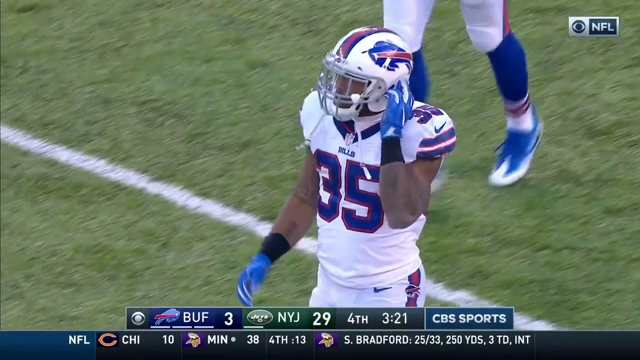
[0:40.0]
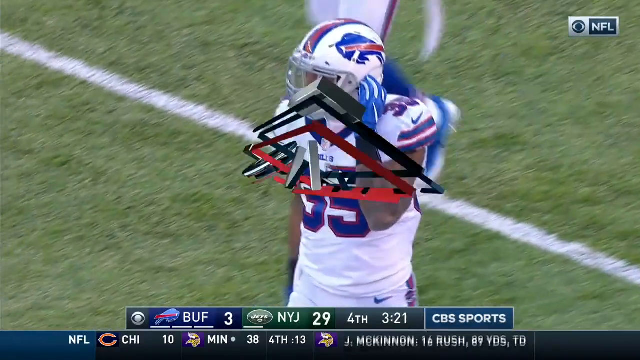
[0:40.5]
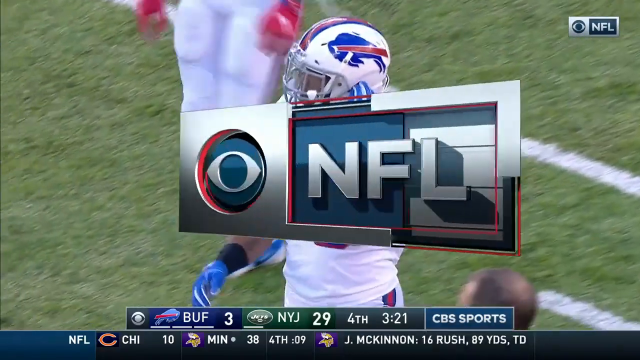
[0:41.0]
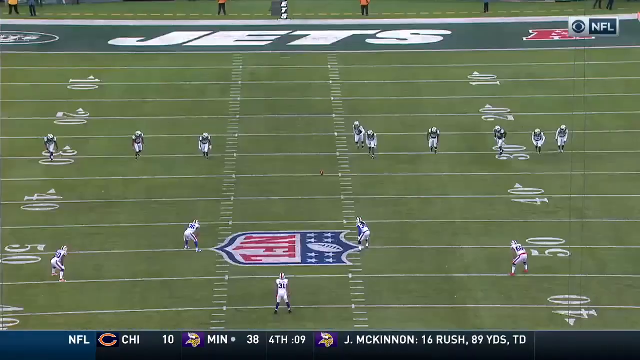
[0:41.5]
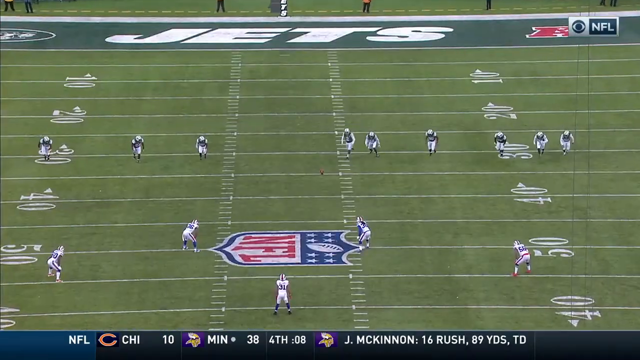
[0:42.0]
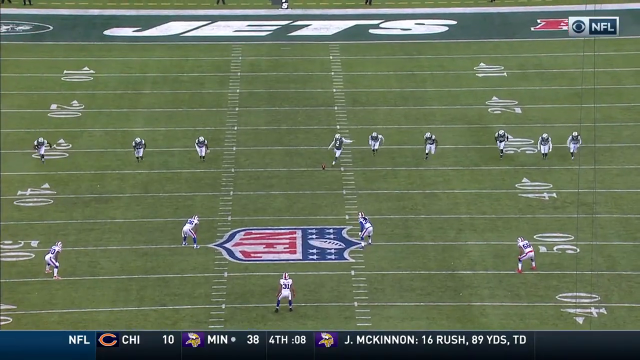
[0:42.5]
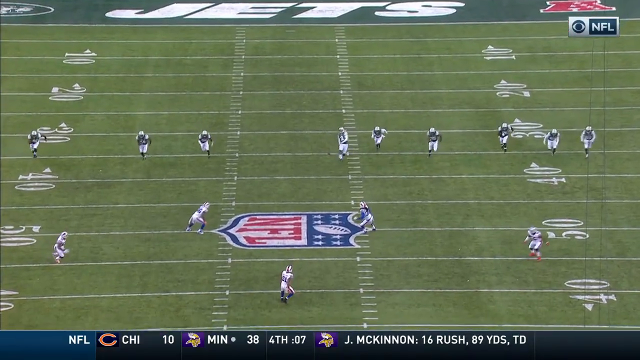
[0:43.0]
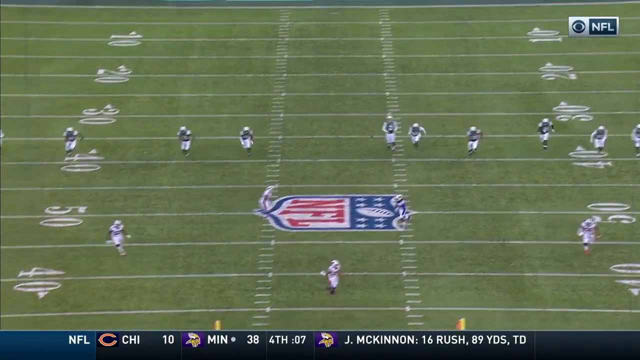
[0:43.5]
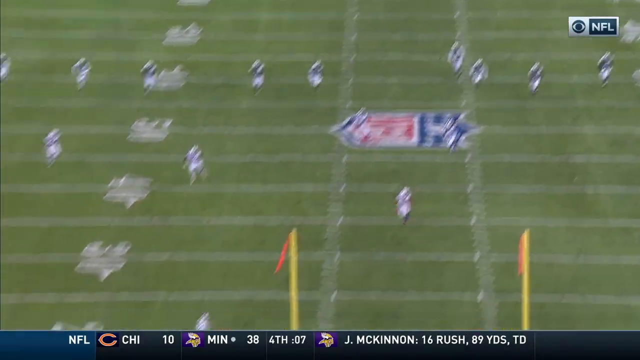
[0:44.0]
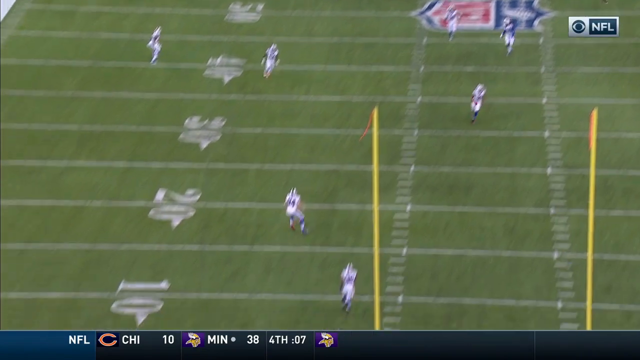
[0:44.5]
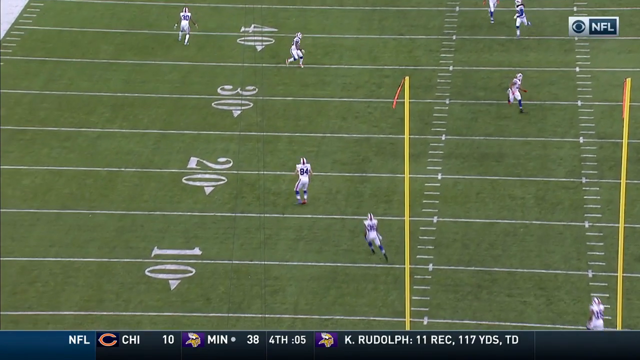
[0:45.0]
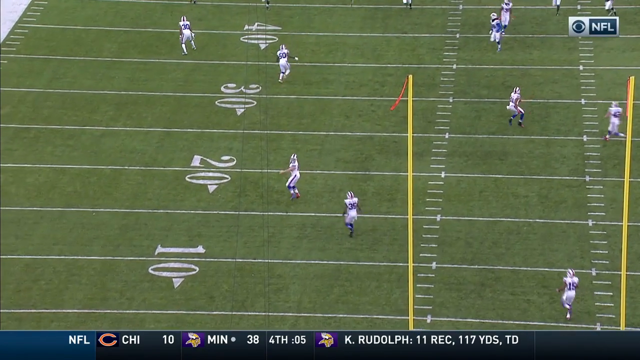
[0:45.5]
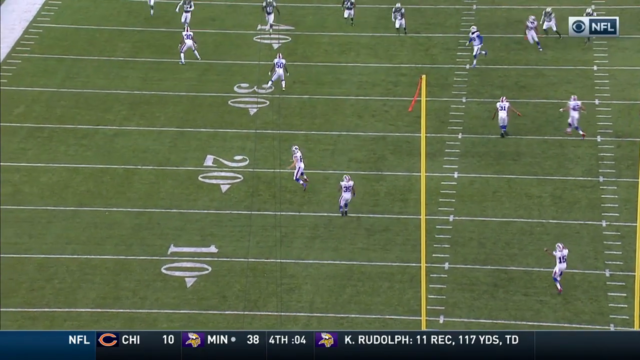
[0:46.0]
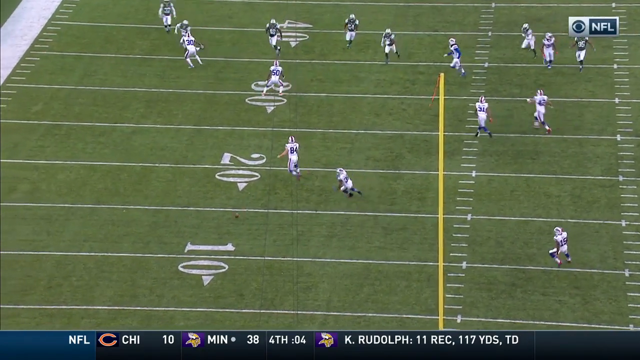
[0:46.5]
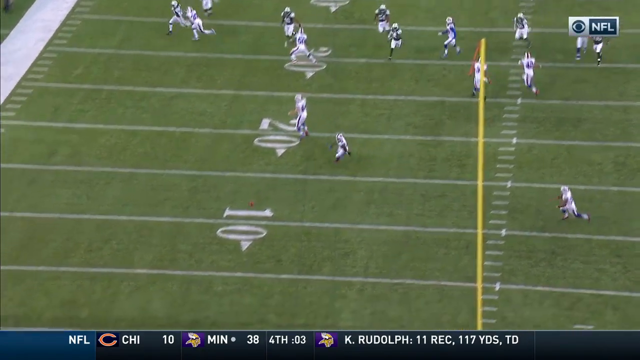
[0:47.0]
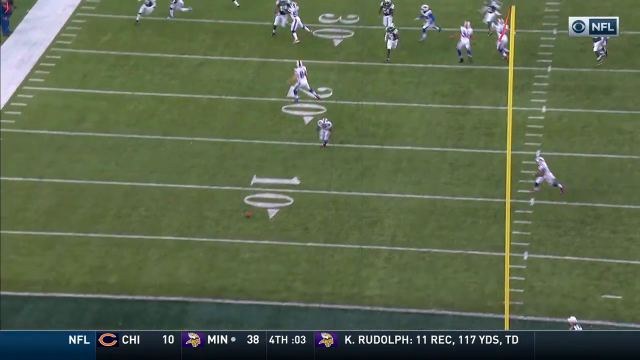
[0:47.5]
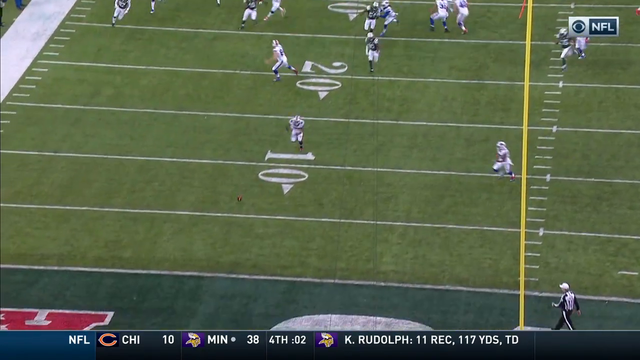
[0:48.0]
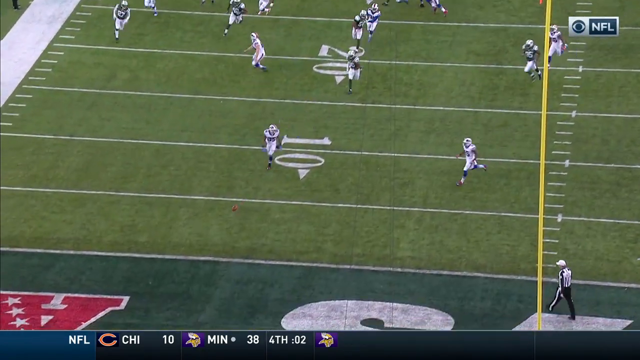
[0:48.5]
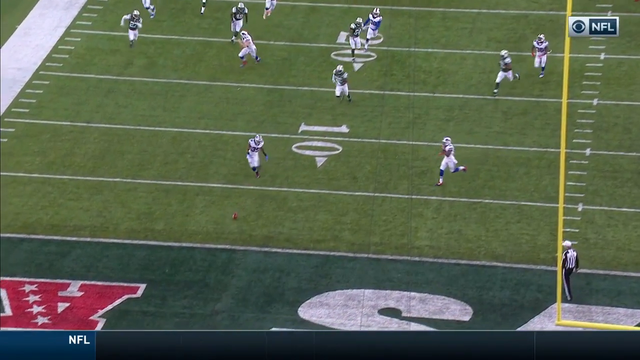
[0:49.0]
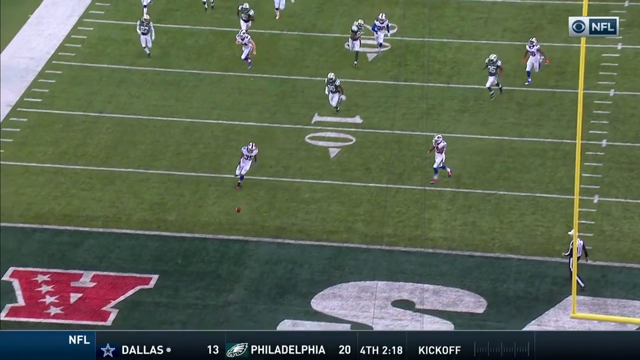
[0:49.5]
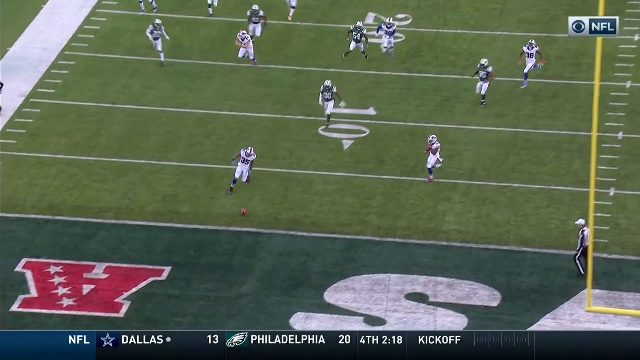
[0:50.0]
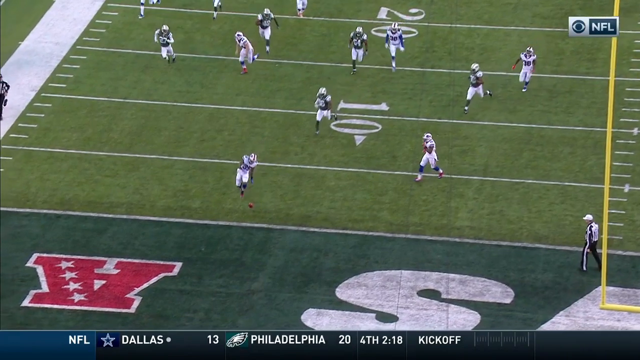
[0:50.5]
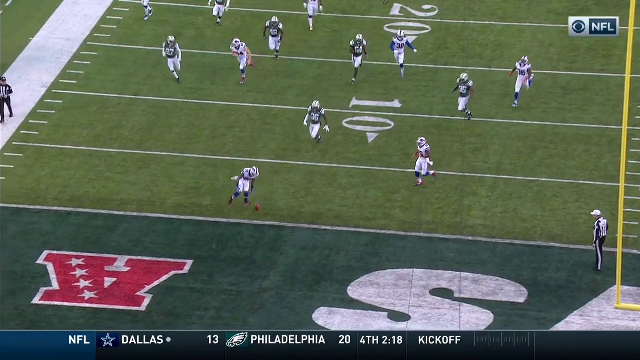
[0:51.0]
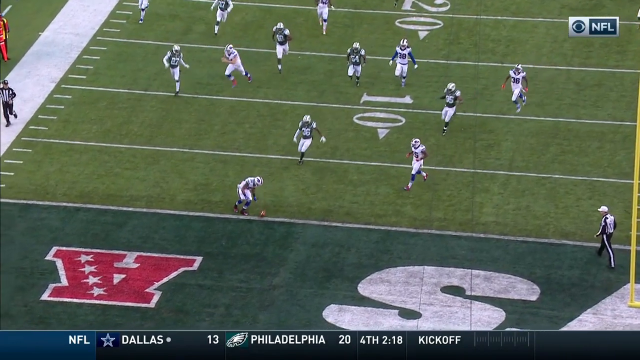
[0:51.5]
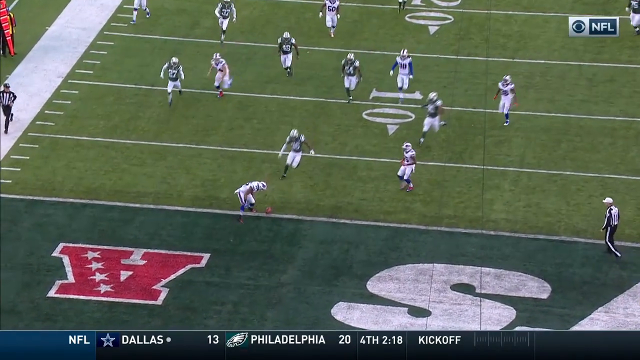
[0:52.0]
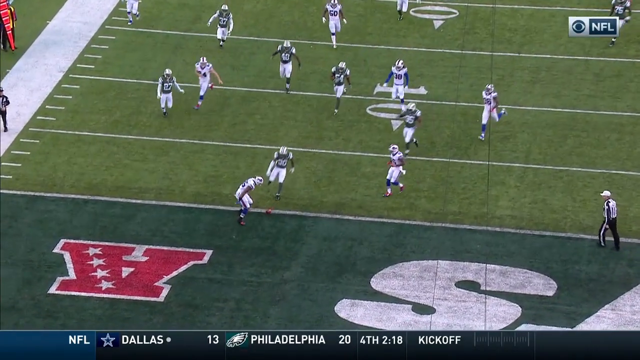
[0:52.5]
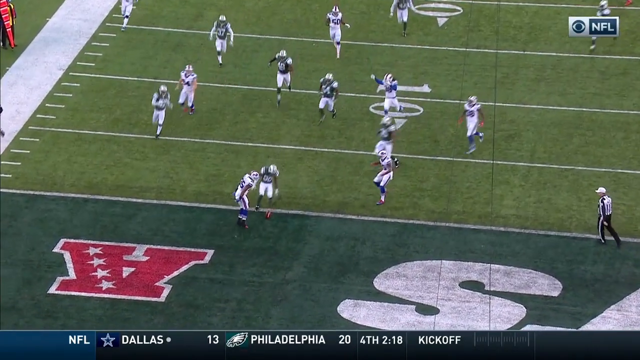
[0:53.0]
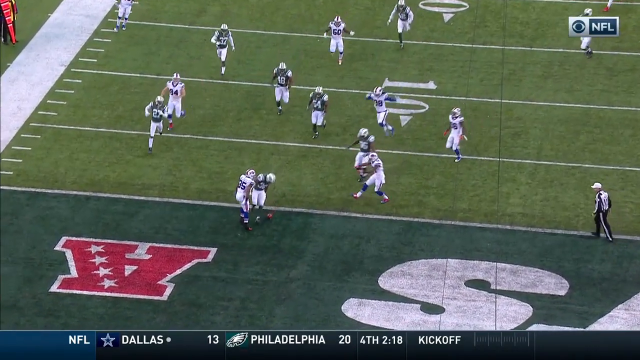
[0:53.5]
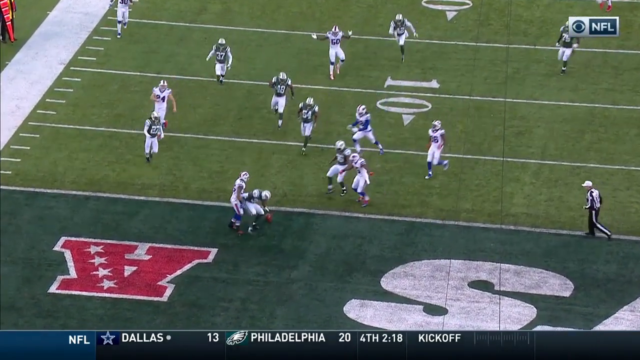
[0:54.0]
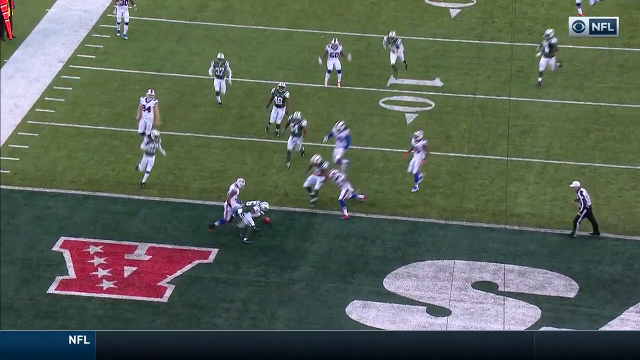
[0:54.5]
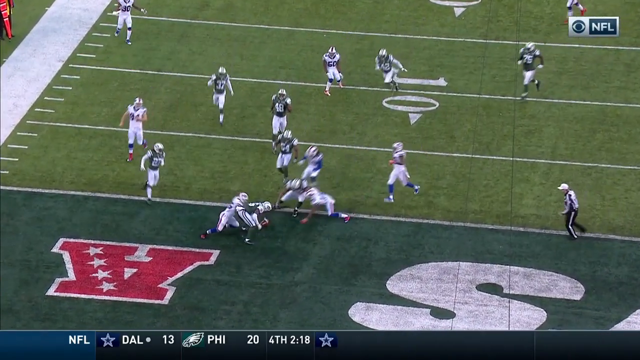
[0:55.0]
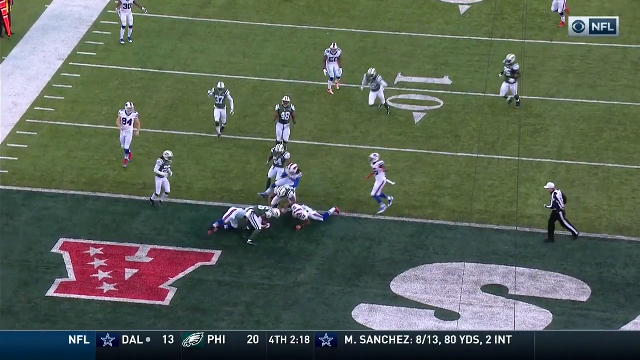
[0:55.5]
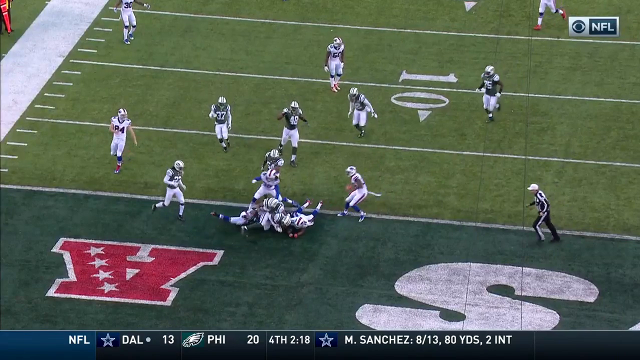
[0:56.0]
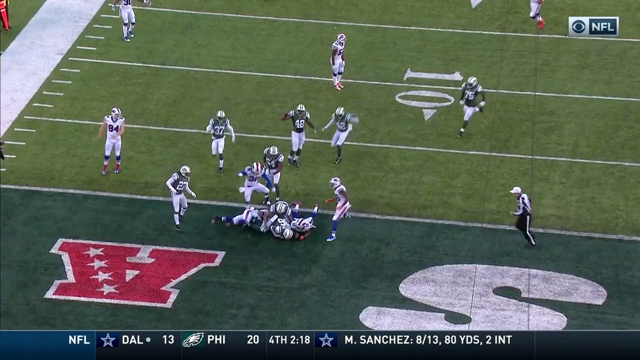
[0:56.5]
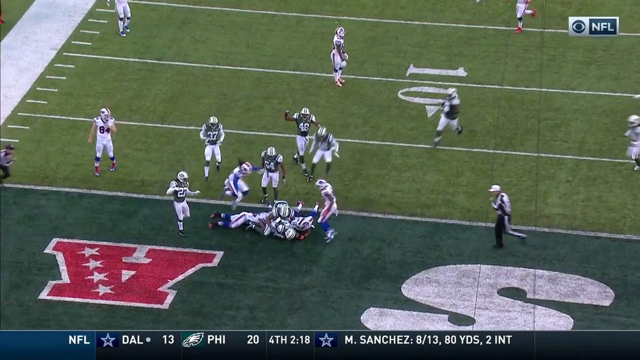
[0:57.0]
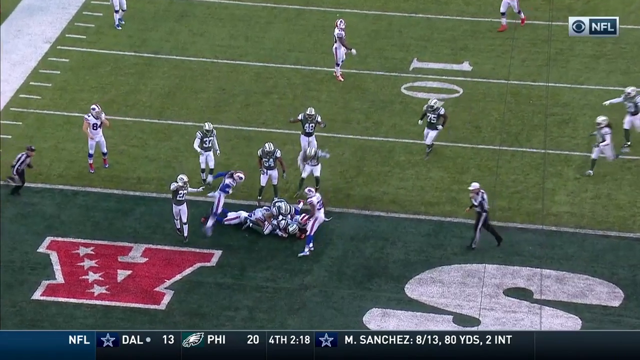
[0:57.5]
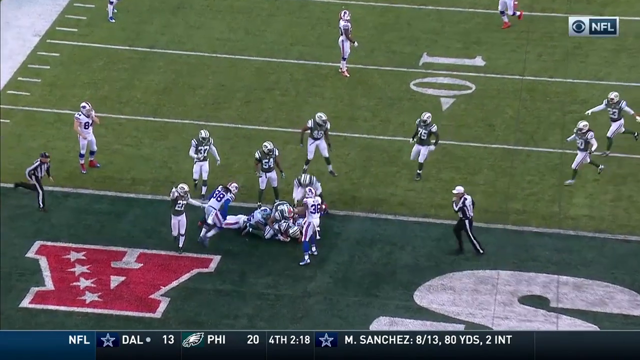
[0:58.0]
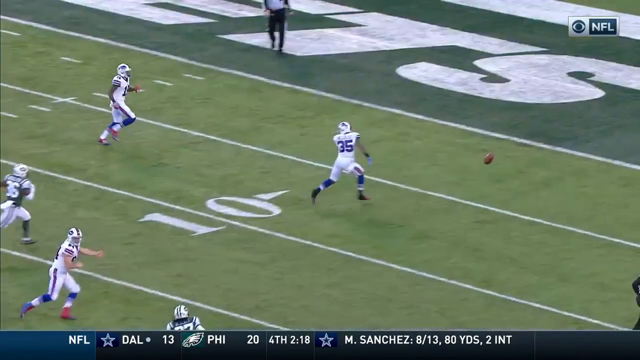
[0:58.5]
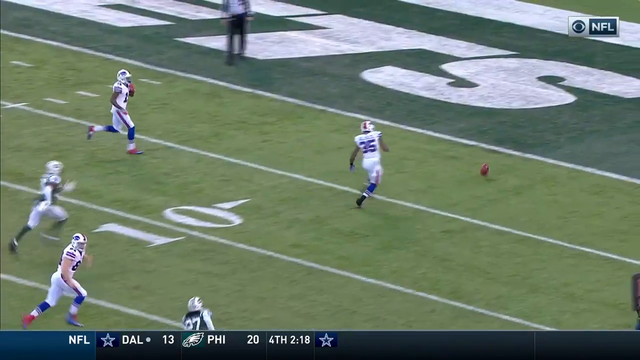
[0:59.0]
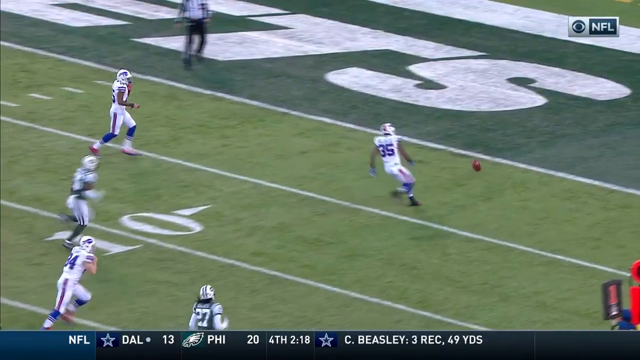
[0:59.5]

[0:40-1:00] The score at the bottom of the screen shows Buffalo with 3 and the New York Jets with 23, in the fourth quarter with just a few minutes left. Players are lined up on the field. The video cuts to a replay showing the ball being punted, landing around the 10 and rolling into the end zone. Two players, one from each team, try to jump on the ball, which looks like it was slightly tapped by one of the players. Buffalo Bills player number 35 is shown with his hand up near the side of his helmet, where the helmet is unbuckled to take it off. A scroller at the bottom shows other team scores, including Chicago 10, Minnesota 38, Dallas 13 and Philadelphia 20, and mentions players such as M. Sanchez.